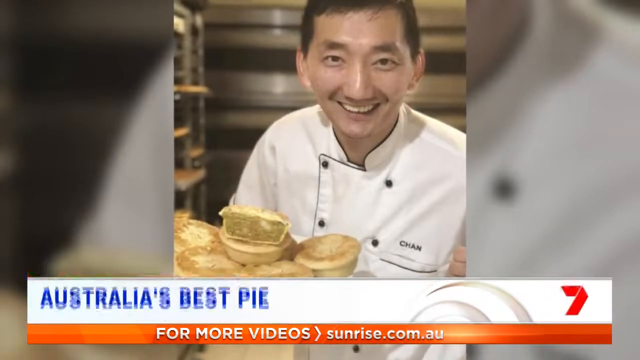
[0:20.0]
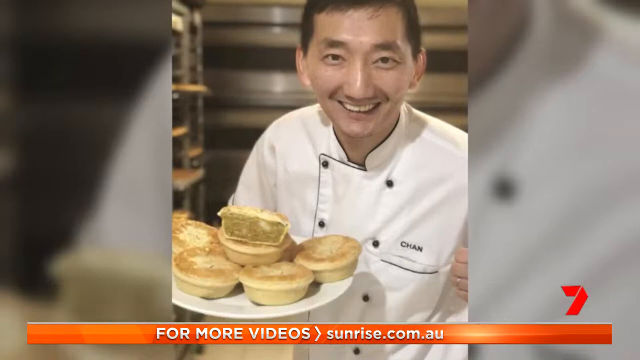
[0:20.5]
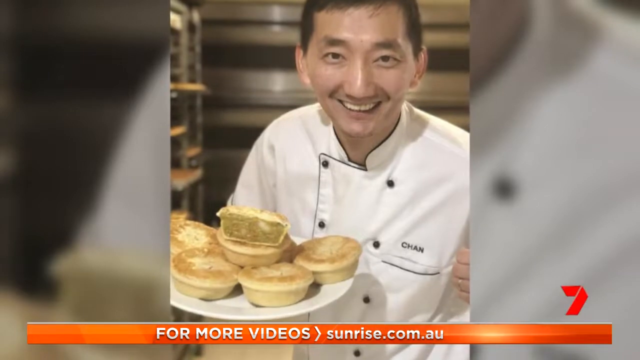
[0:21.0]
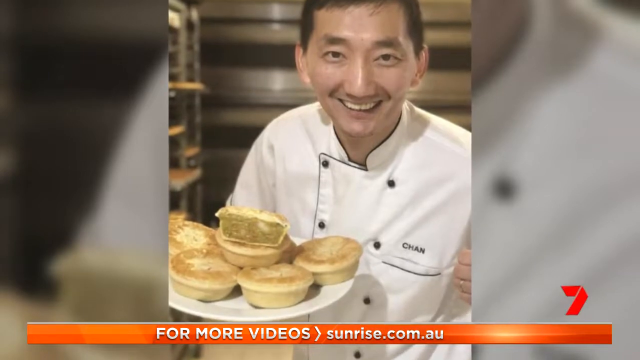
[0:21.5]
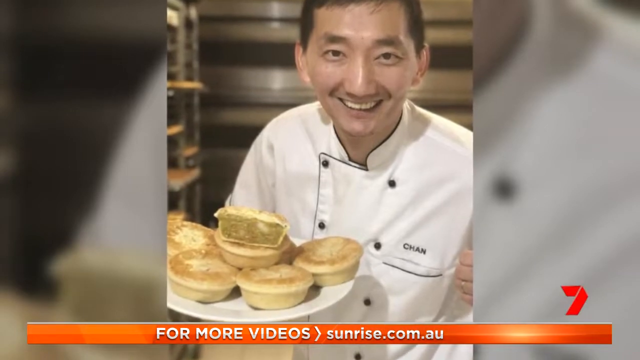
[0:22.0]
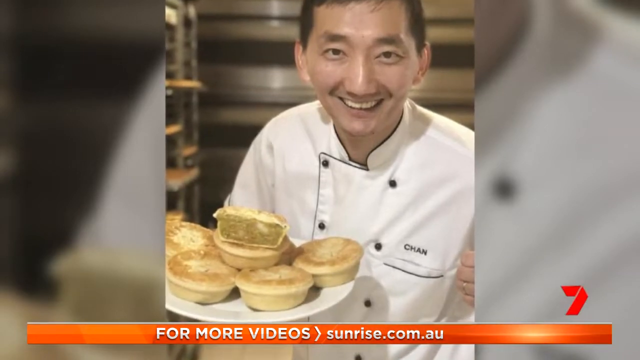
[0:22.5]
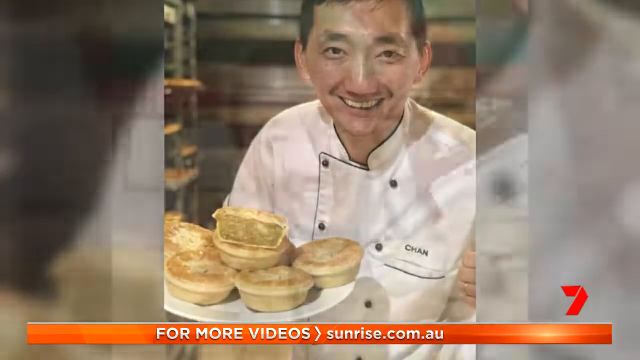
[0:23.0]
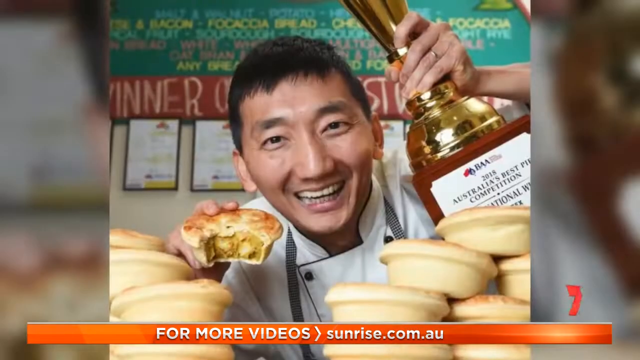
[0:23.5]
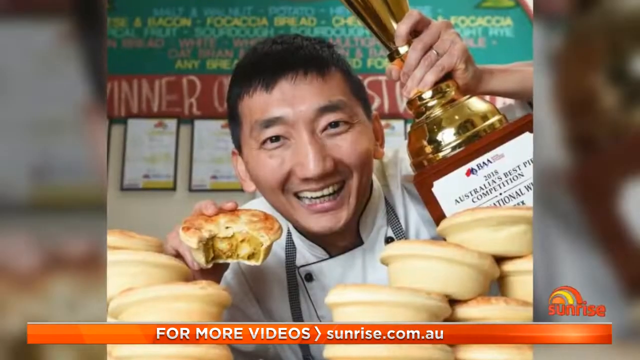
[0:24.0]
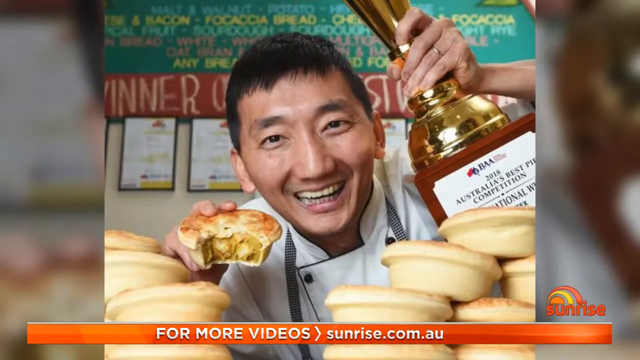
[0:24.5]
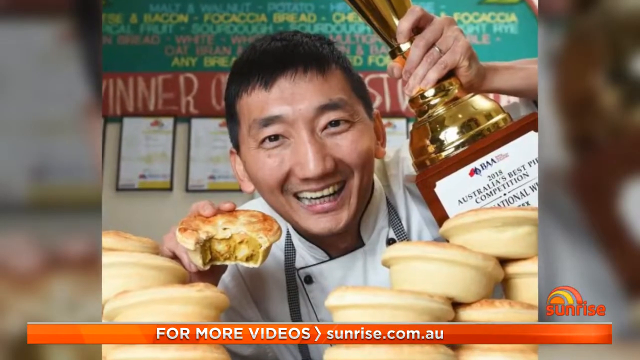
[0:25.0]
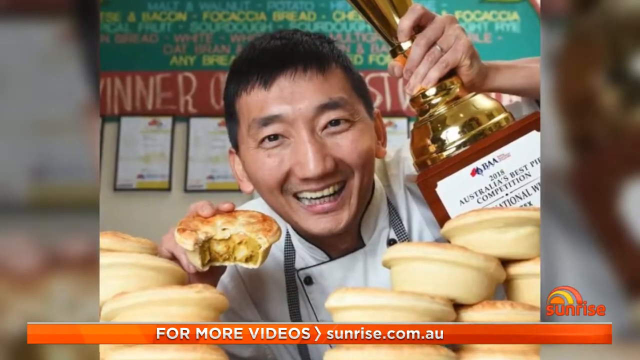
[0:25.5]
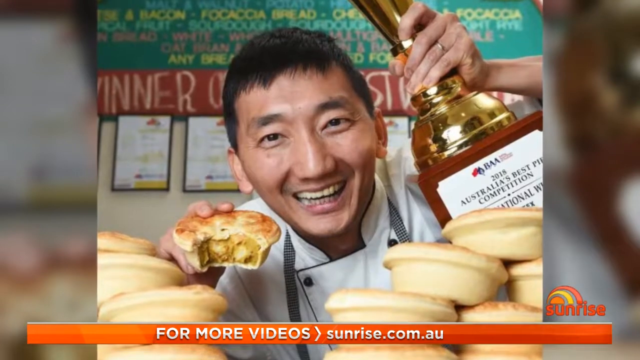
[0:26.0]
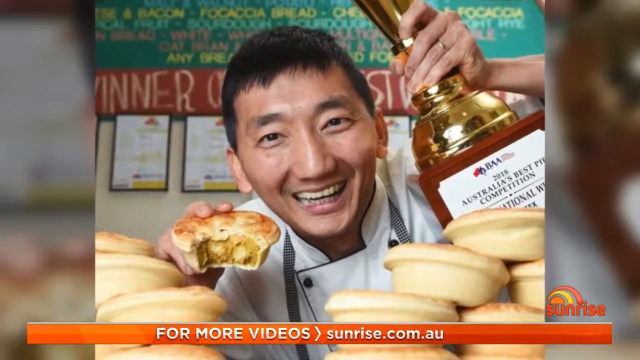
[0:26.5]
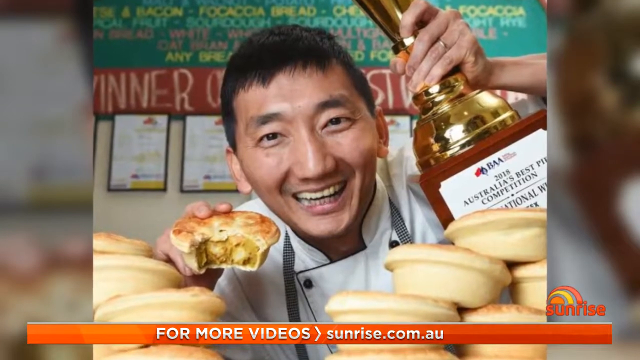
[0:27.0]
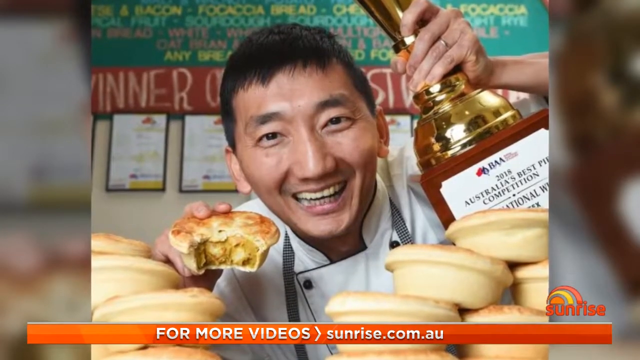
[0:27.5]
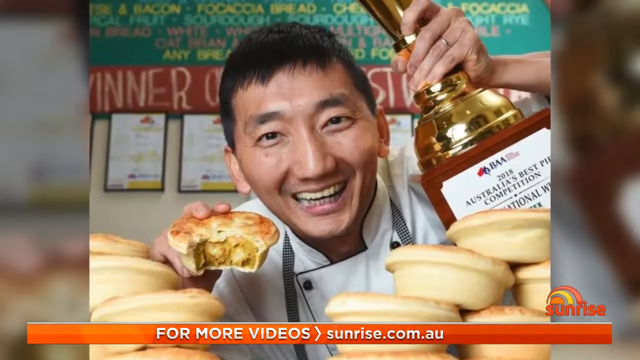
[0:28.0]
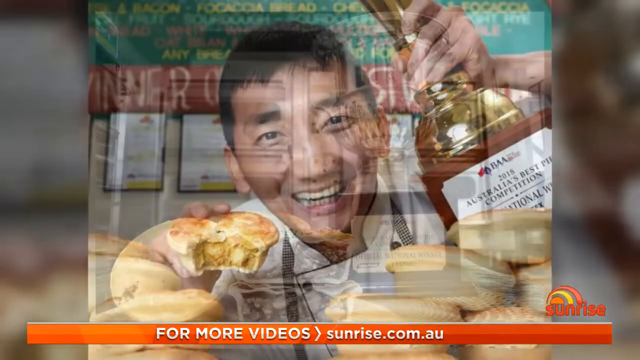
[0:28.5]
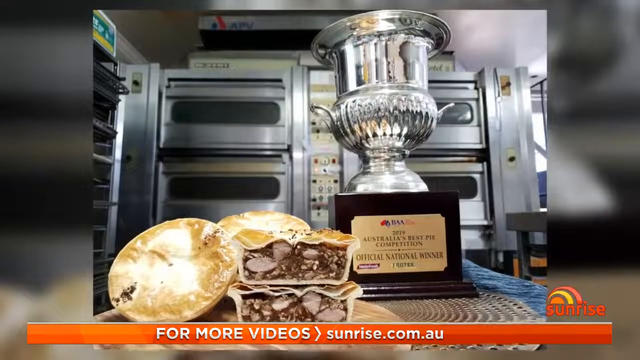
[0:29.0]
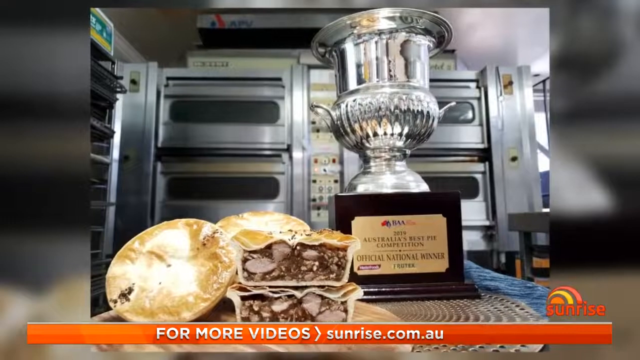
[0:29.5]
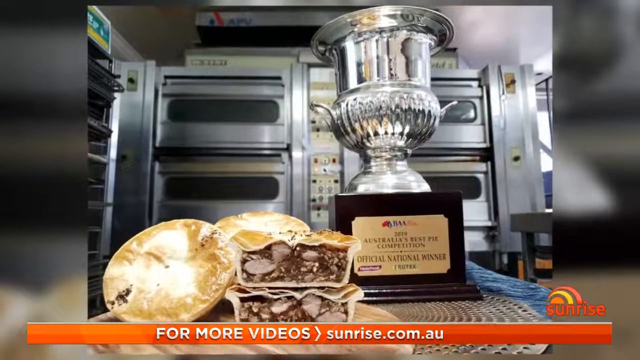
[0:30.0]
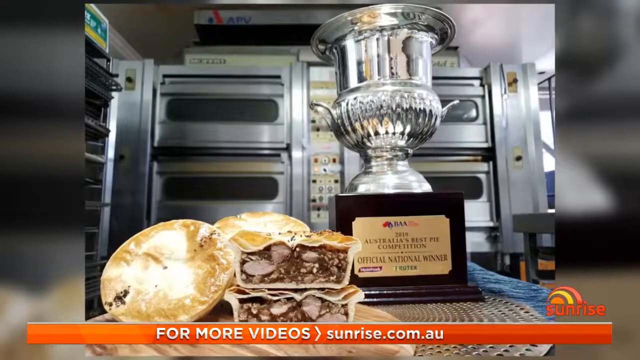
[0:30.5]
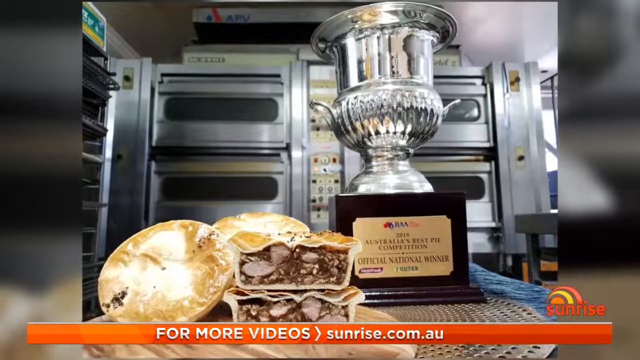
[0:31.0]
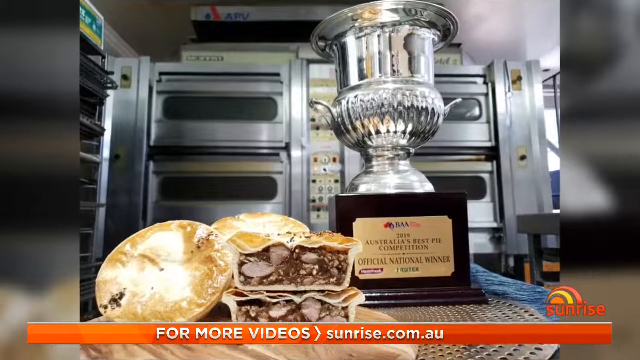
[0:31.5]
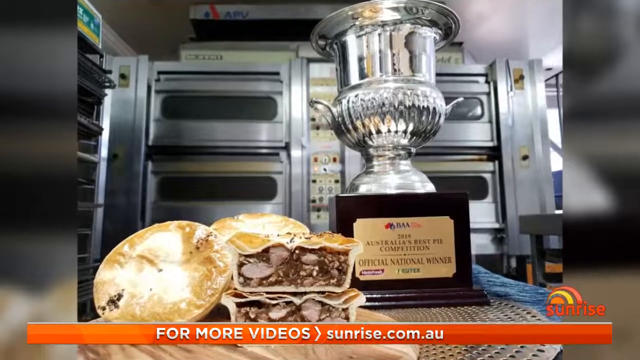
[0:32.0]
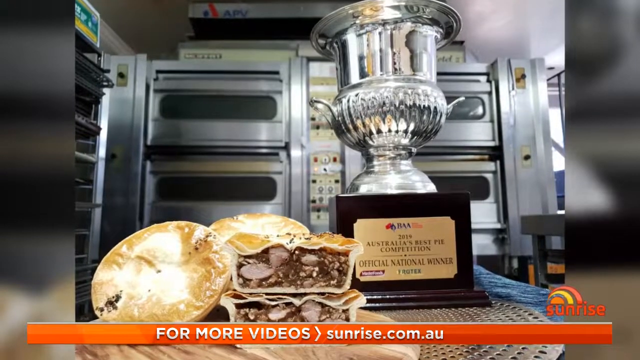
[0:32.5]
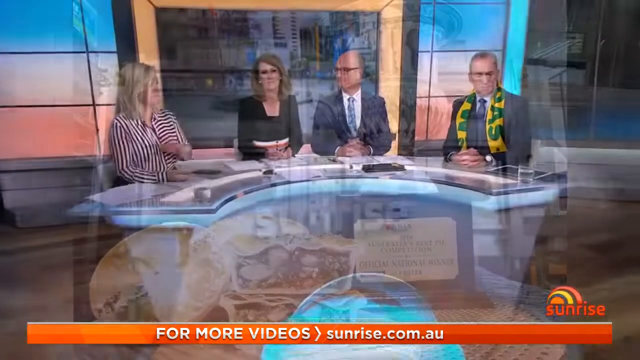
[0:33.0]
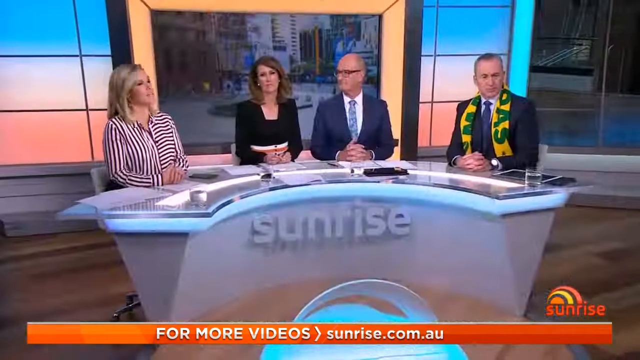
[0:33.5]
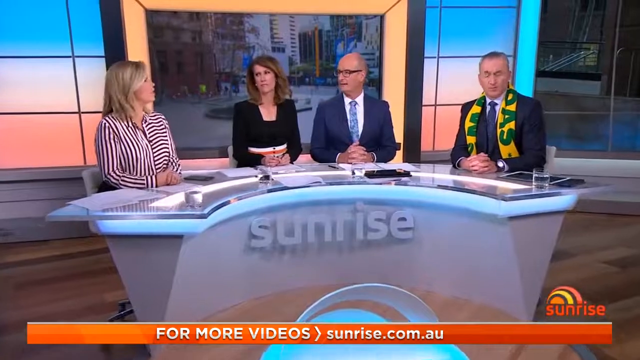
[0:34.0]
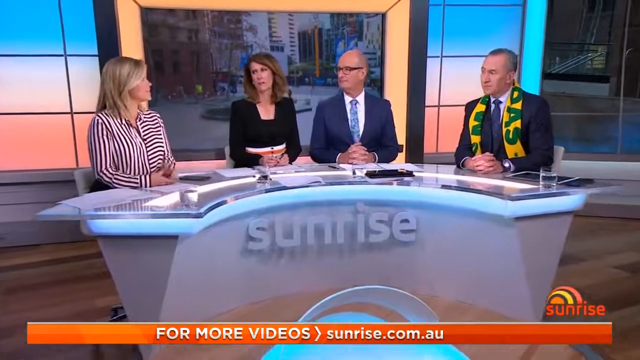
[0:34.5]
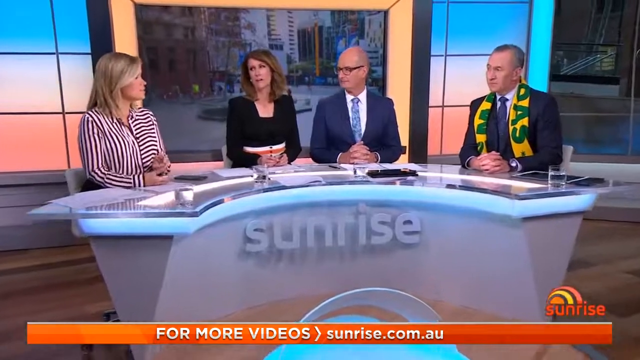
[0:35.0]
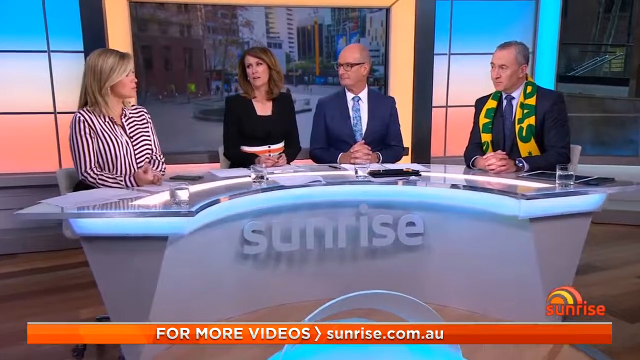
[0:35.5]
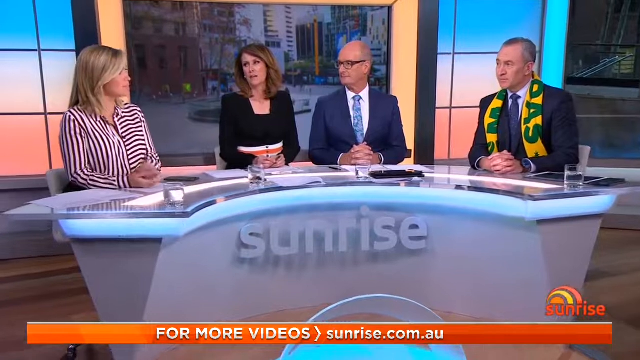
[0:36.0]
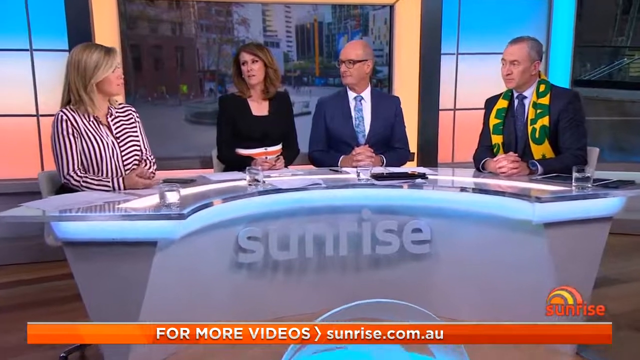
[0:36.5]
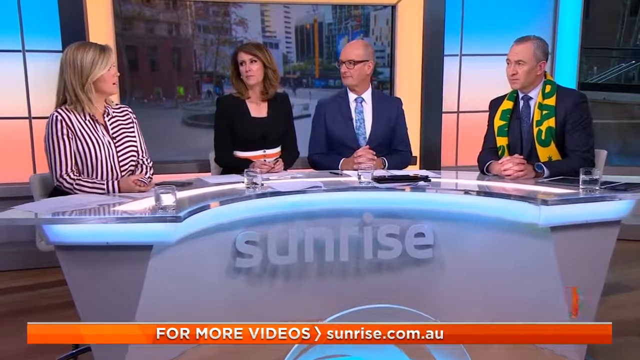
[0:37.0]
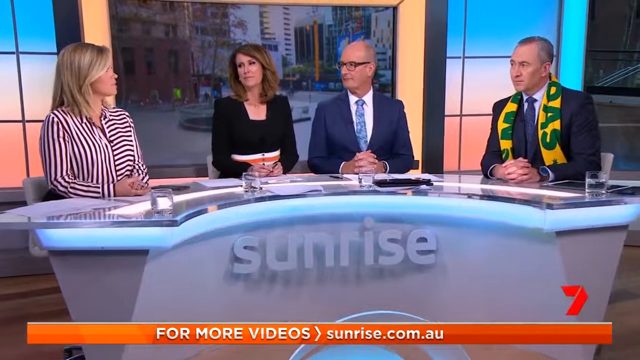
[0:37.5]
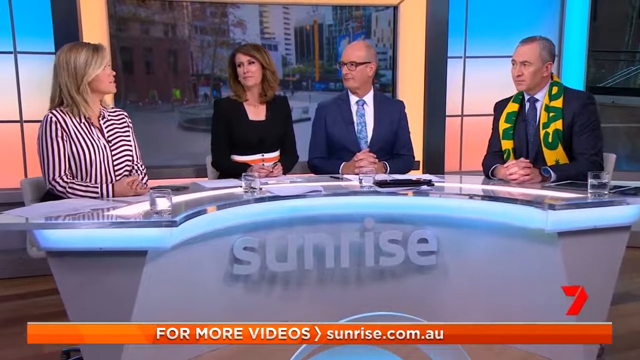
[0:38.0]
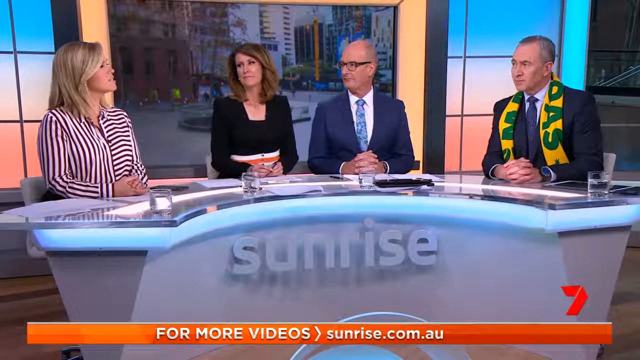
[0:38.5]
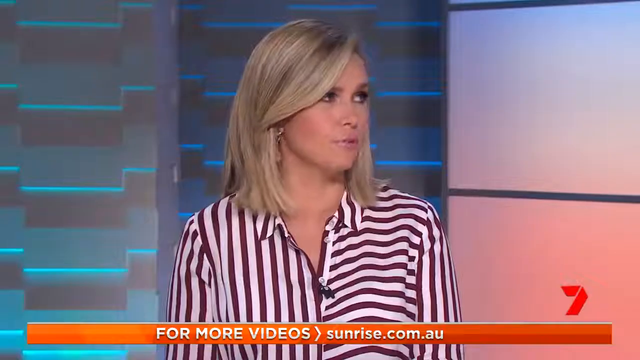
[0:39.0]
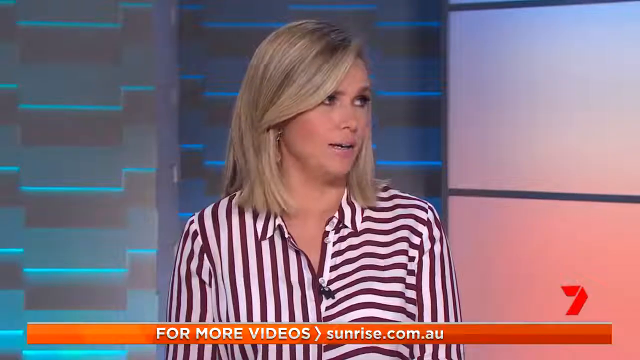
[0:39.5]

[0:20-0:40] The camera zooms in to the man, who wears long-sleeved white with a black sports jacket. He has what seems to be a drink, and next to him are goodies that seem to be a pie and muffins. As the camera zooms closer, a ring is visible on his left hand, apparently indicating he is married, and what he is carrying is an award trophy, possibly awarded for the best pie. The award and the pie are pictured together. The camera zooms back into the studio, where the woman is presenting the news. She is joined by three people: two men and another woman in a black dress. One man wears a yellow and blue scarf, while the other wears glasses, a suit and a blue tie. The studio is modern, with a glass table and lighting.